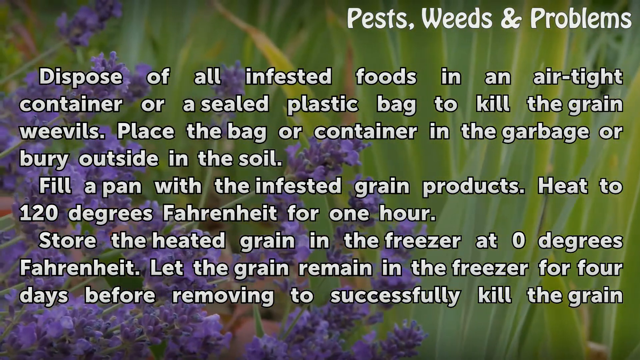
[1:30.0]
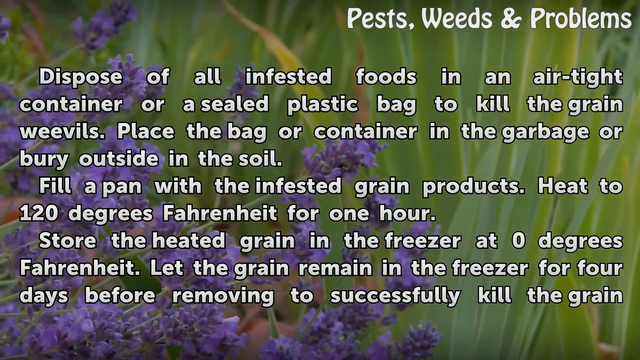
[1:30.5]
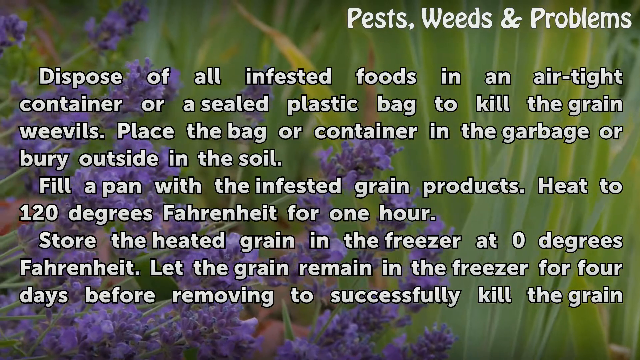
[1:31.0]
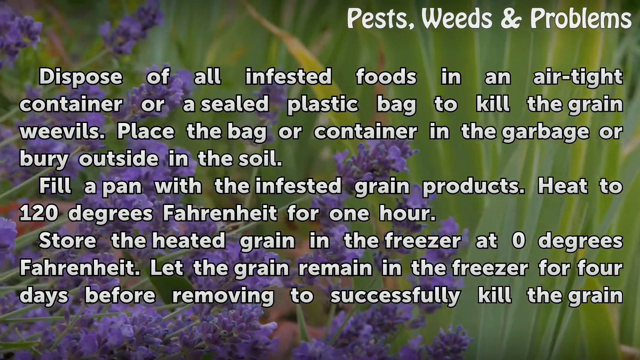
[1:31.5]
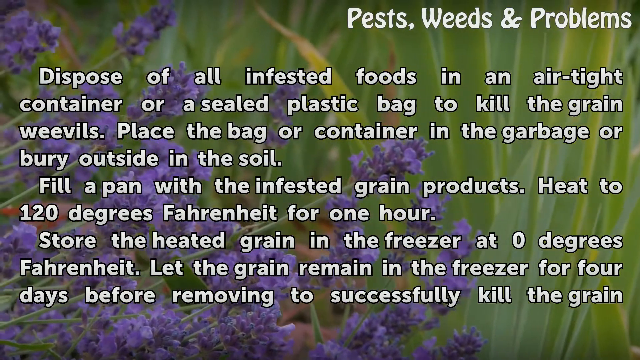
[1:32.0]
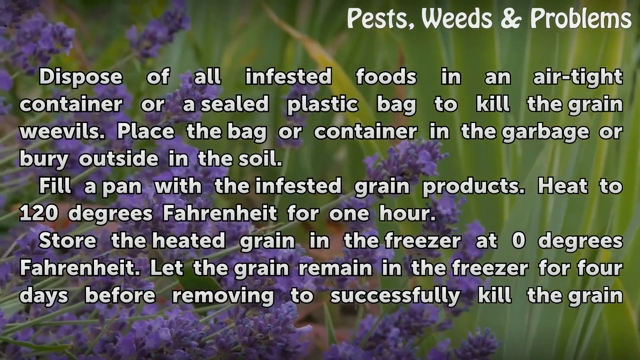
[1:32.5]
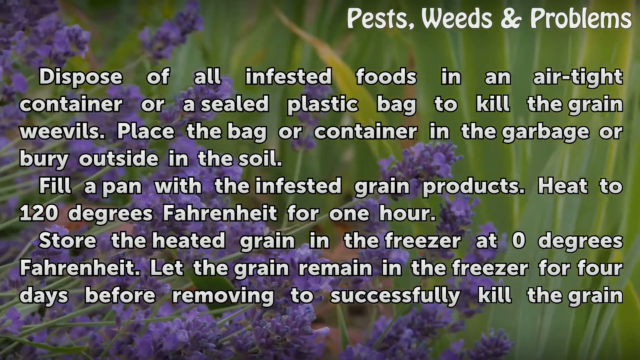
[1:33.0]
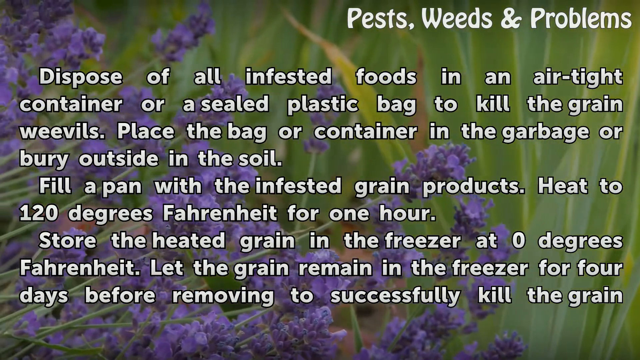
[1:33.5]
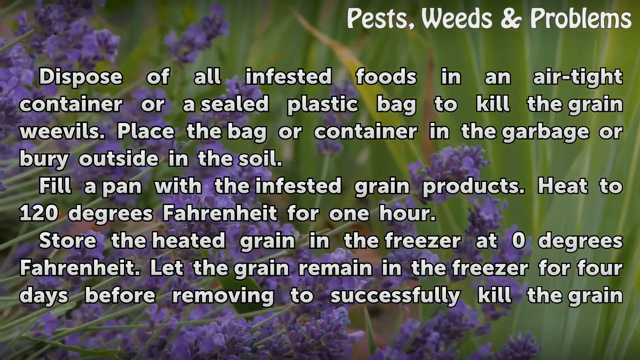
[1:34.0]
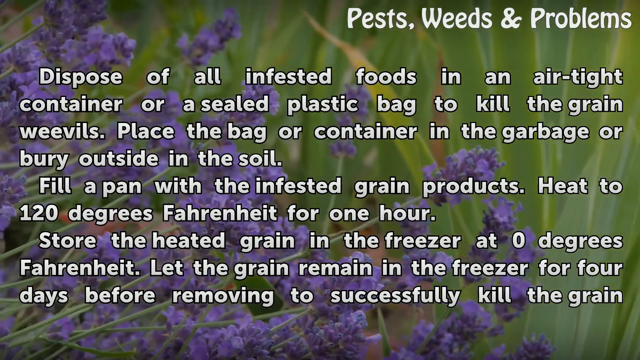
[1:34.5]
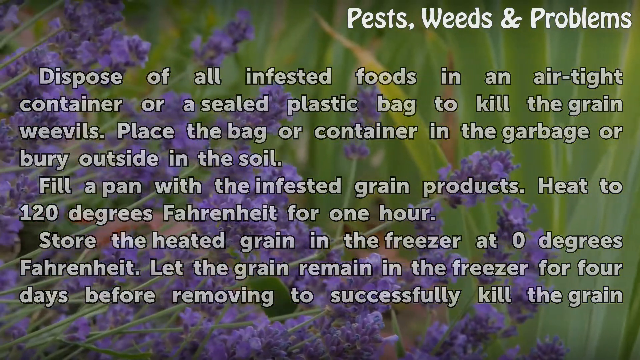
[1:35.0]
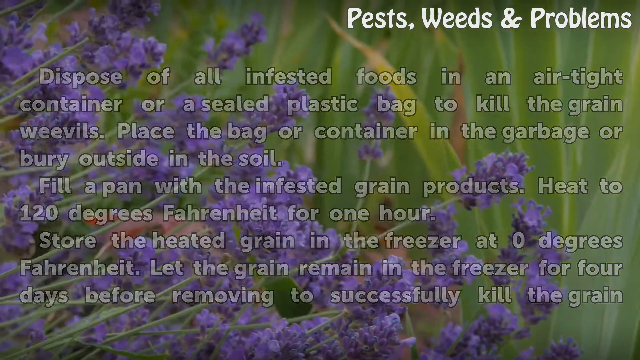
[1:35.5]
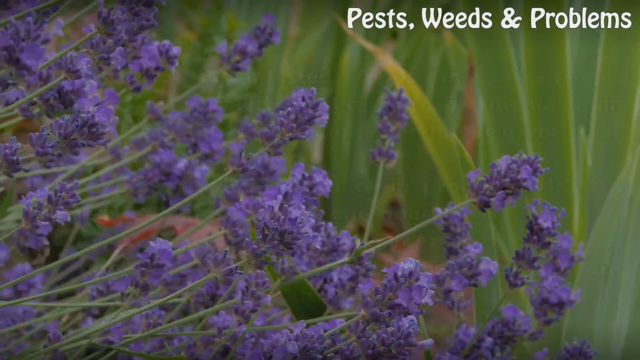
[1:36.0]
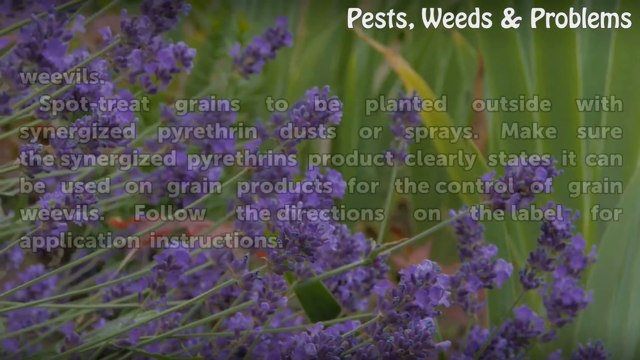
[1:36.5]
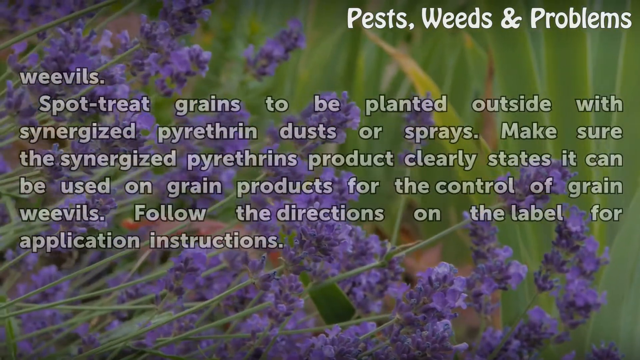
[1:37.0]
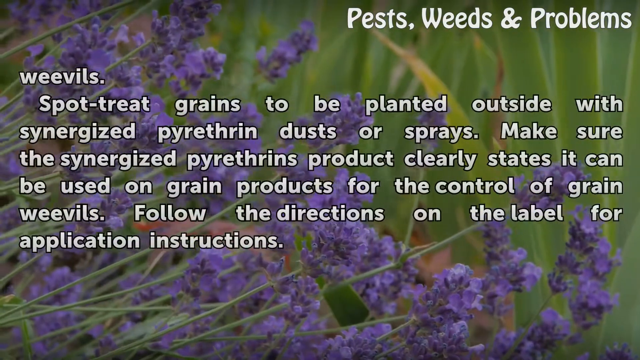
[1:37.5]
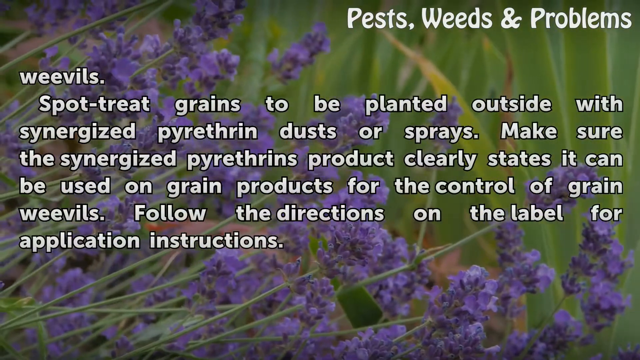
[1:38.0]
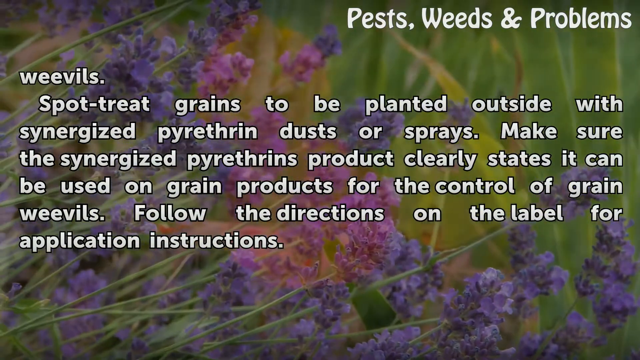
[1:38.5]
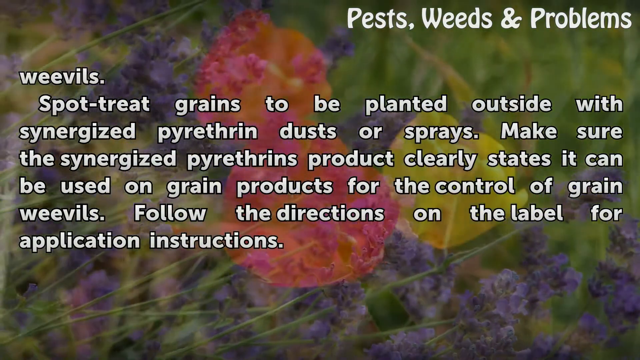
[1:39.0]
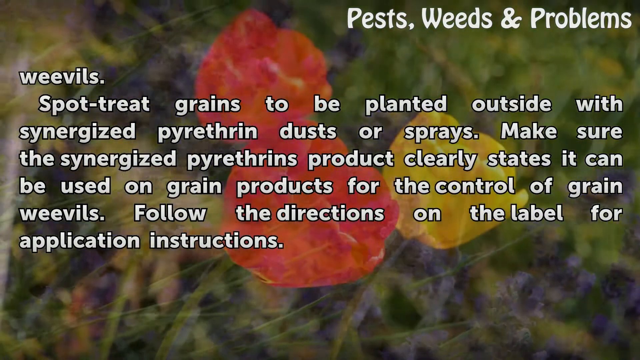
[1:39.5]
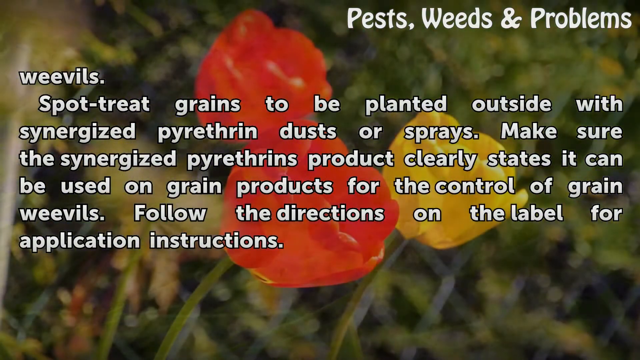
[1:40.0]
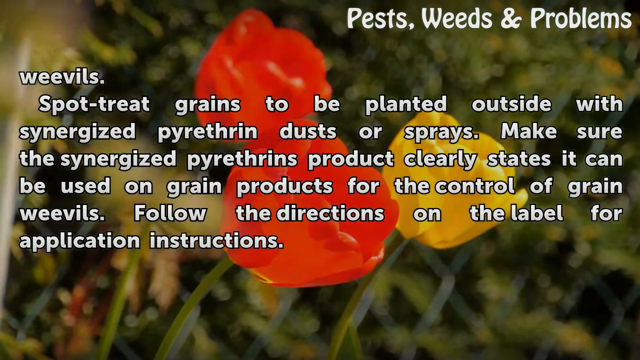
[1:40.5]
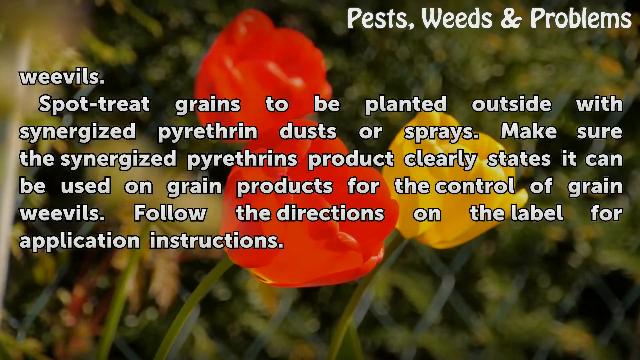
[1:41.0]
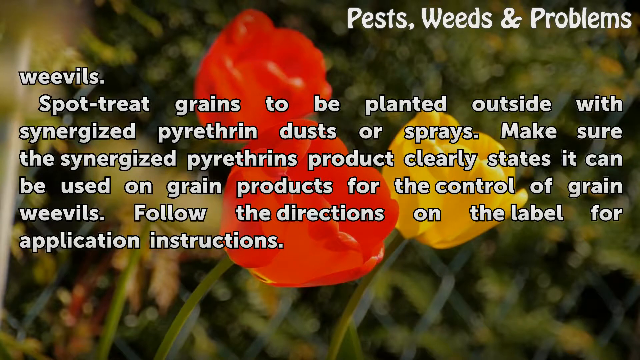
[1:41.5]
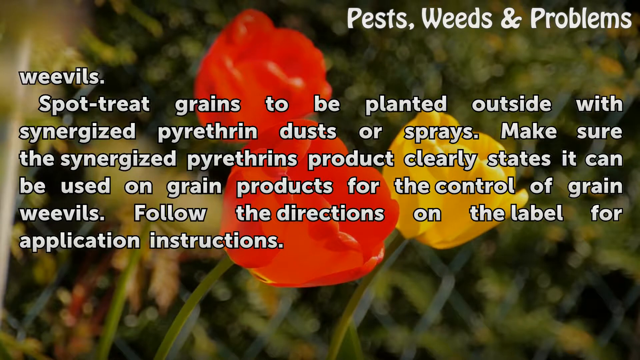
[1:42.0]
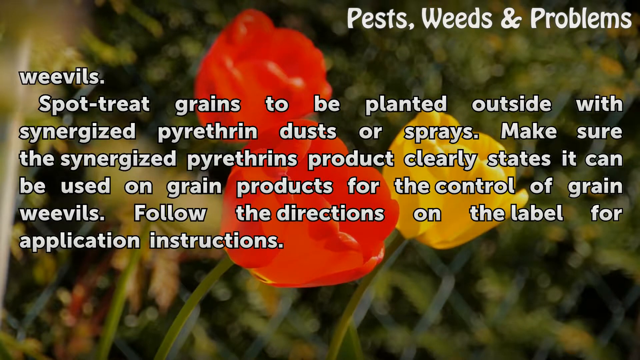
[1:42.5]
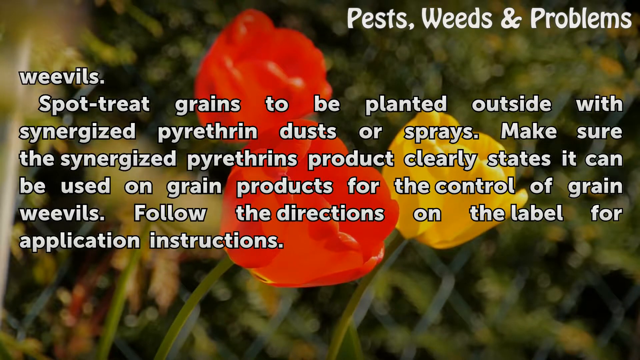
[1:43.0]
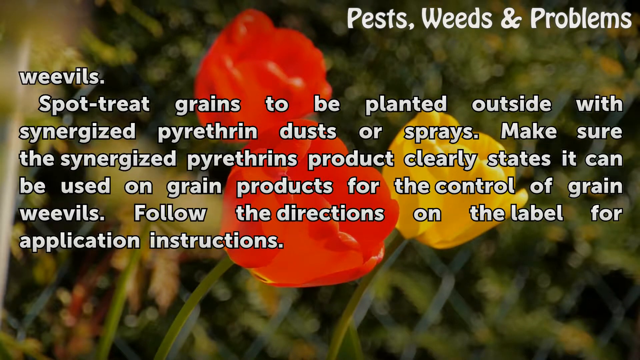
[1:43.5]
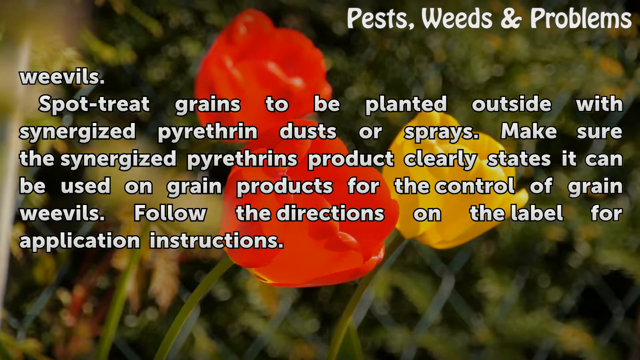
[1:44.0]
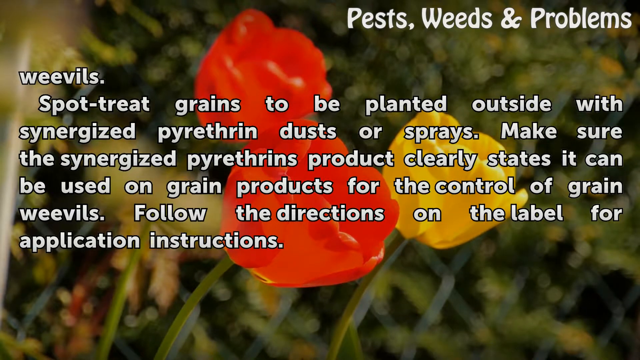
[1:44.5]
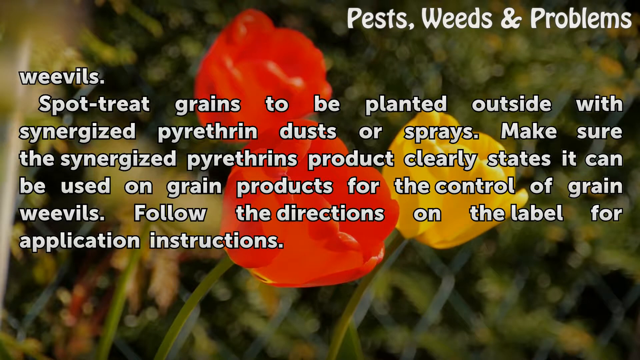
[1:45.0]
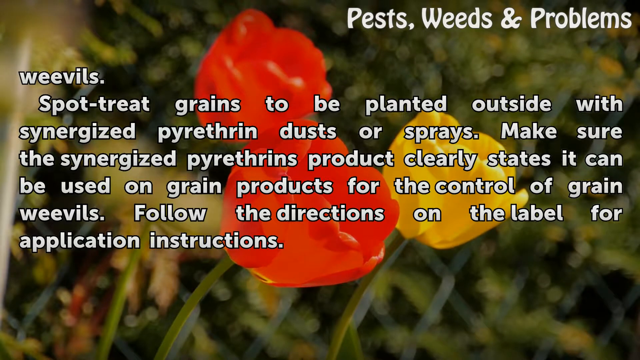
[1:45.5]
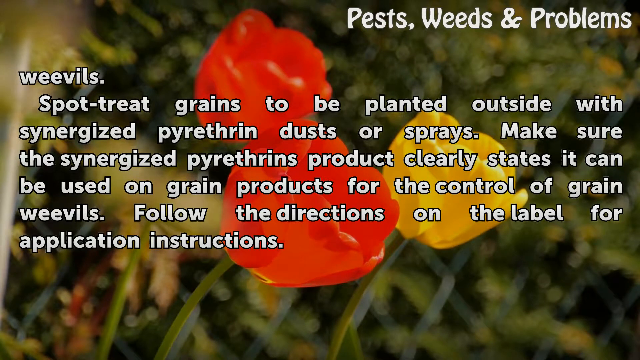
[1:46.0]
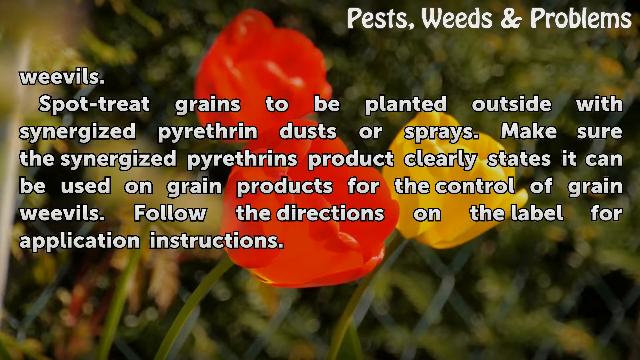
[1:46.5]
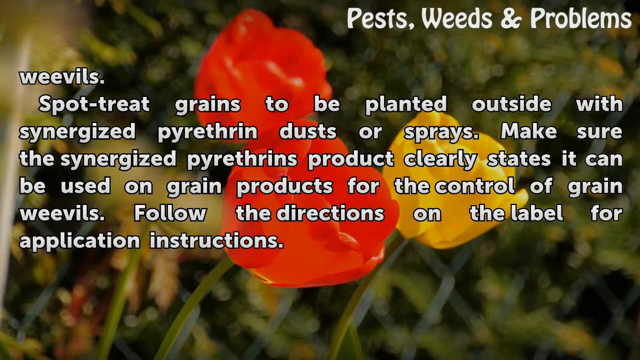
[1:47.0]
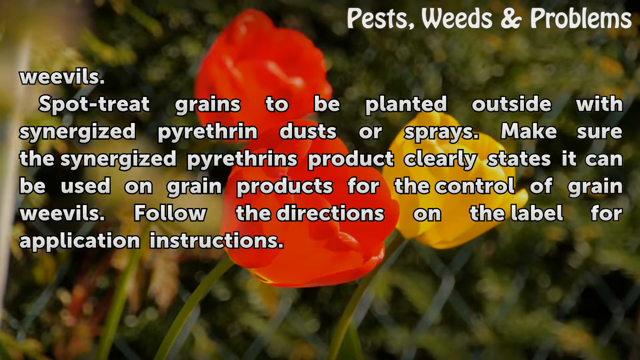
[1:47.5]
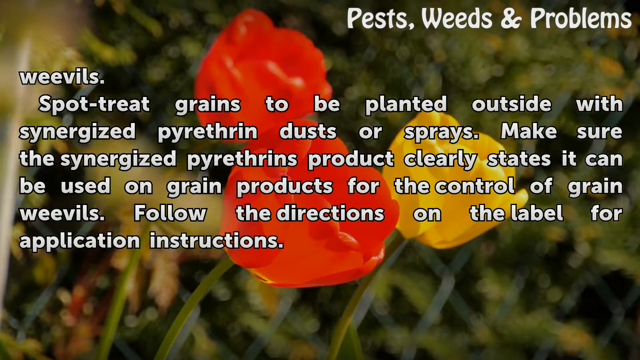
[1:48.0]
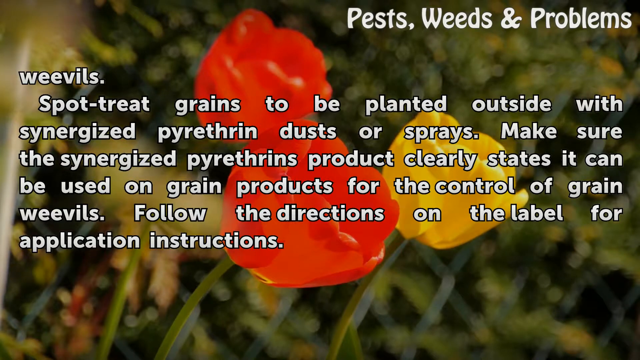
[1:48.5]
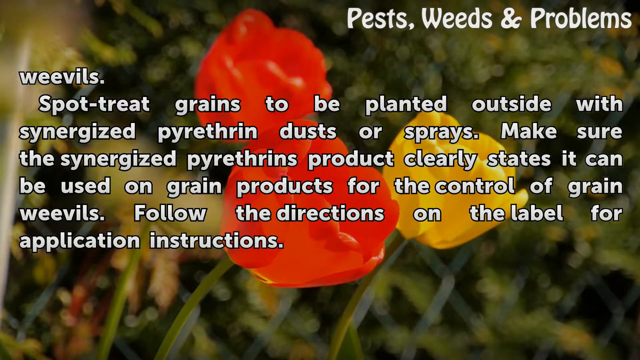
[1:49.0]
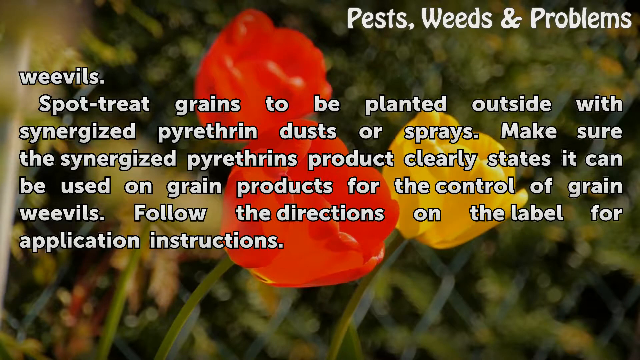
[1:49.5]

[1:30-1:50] A message on the screen reads "dispose of all infested foods in an airtight container or a sealed plastic bag to kill the grain weevils. Place the bag or container in the garbage or bury outside in the soil. Fill a pan with the infested grain product, heat to 120 degrees Fahrenheit for one hour", and then to store the grain in the freezer at zero degrees Fahrenheit for a minimum of four days before removing. Large clusters of purple flowers, looking like jasmine, lavender or something similar, scroll by in the background. The message and the background pictures then change; the new message says to "spot treat grain to be planted outside with synergized pyrethrin dust or sprays", to make sure the pyrethrin product can be used on grain products for the control of grain weevils, and to "follow the directions on the label". In the background are two flowers that look like poppies or small tulips, possibly yellow in the rear.